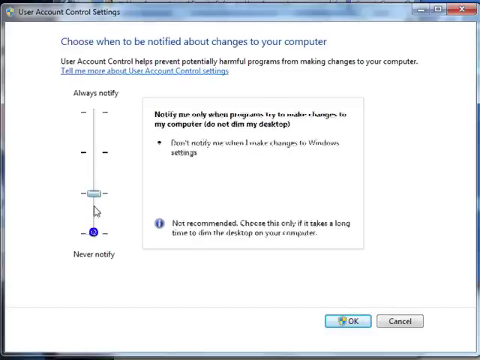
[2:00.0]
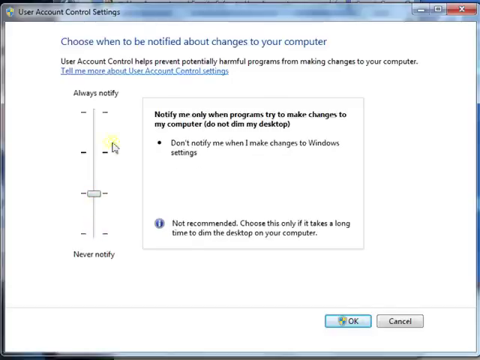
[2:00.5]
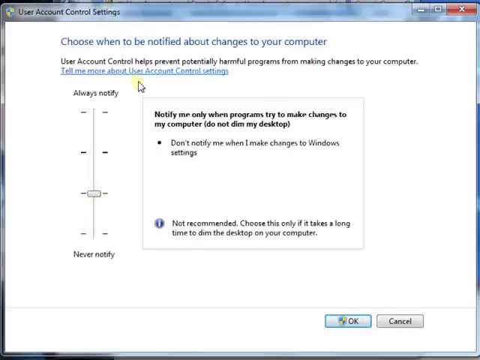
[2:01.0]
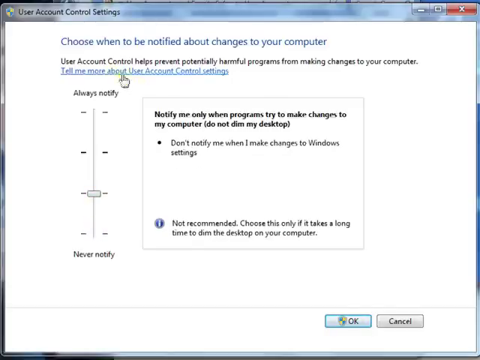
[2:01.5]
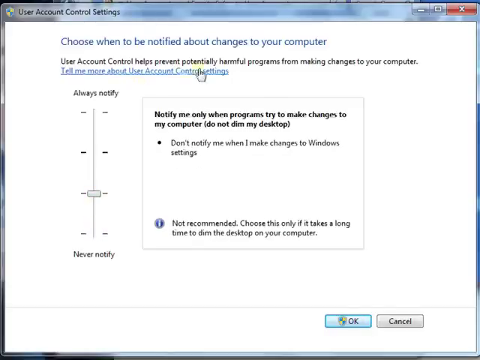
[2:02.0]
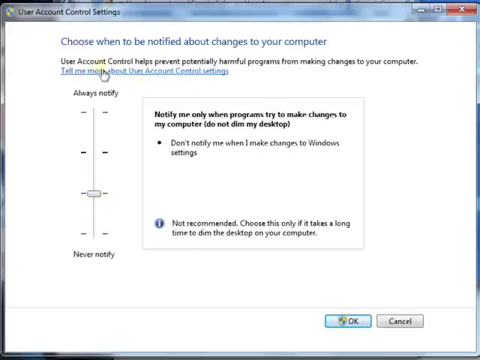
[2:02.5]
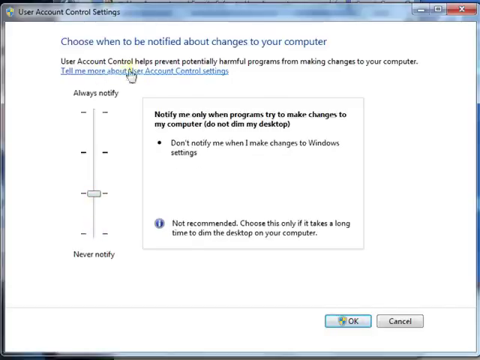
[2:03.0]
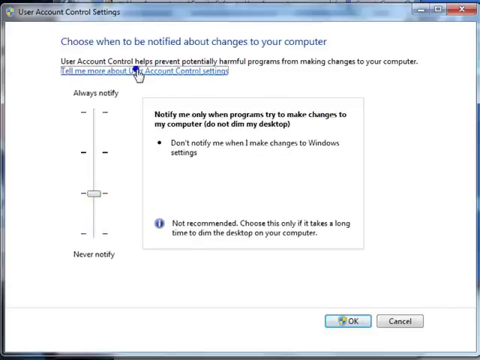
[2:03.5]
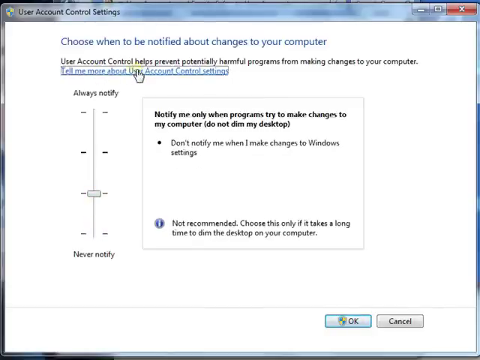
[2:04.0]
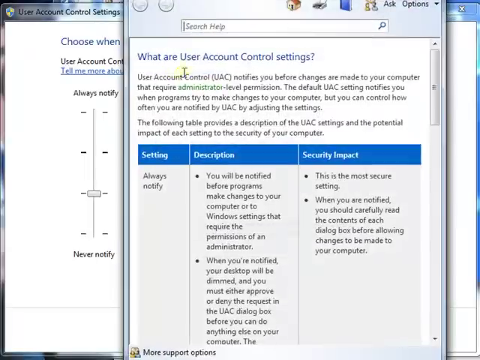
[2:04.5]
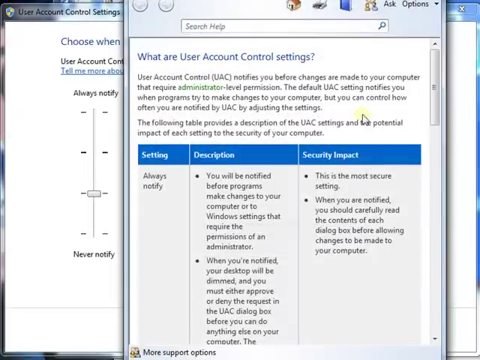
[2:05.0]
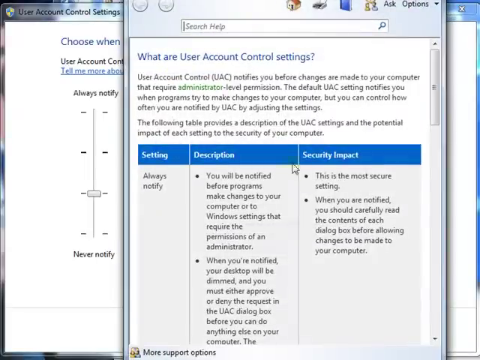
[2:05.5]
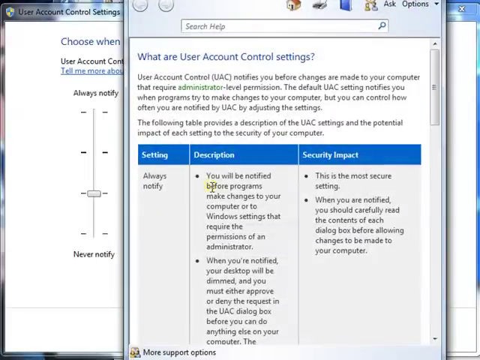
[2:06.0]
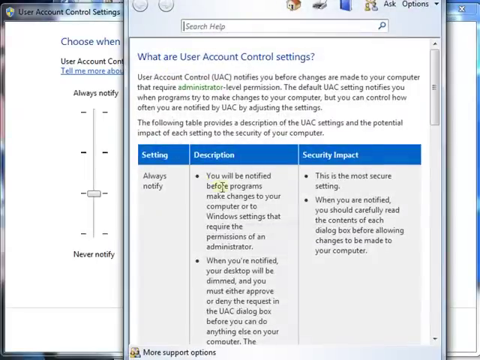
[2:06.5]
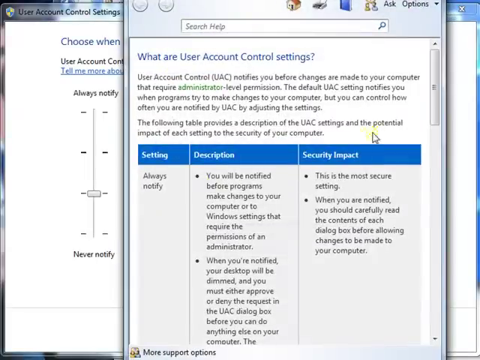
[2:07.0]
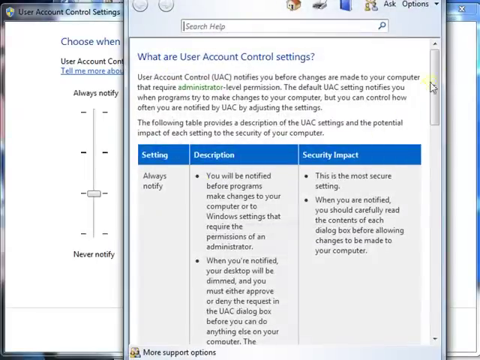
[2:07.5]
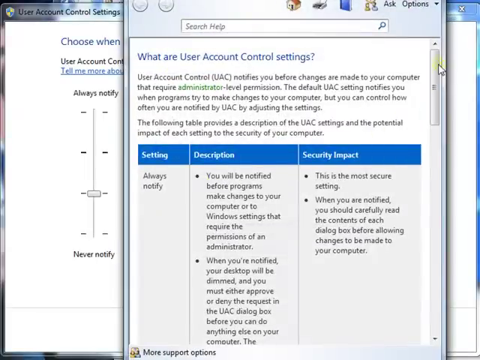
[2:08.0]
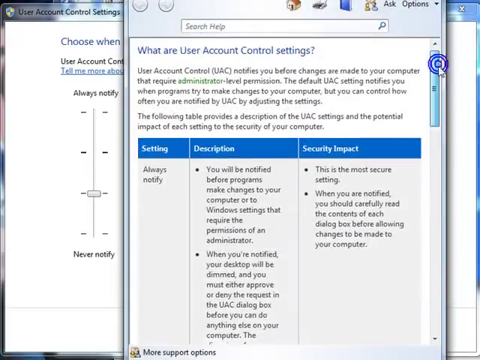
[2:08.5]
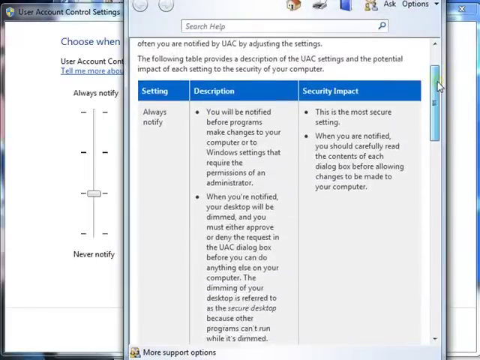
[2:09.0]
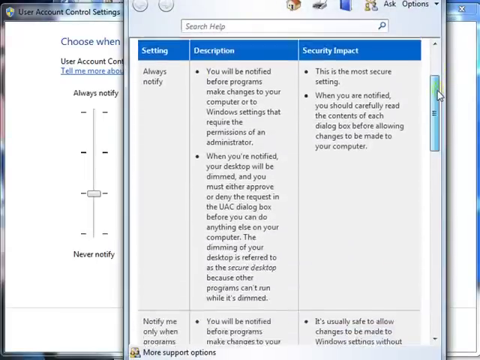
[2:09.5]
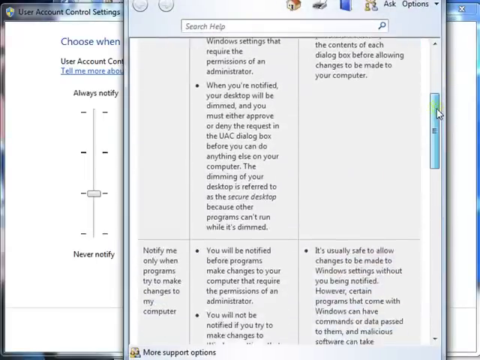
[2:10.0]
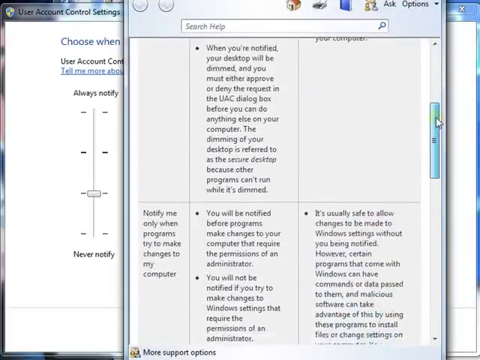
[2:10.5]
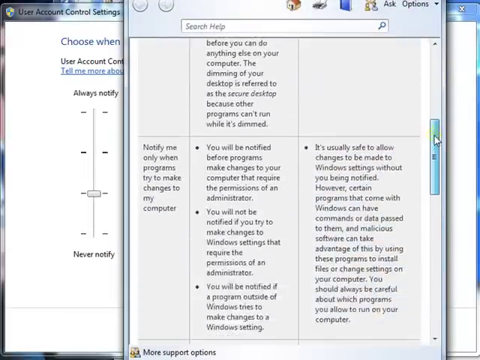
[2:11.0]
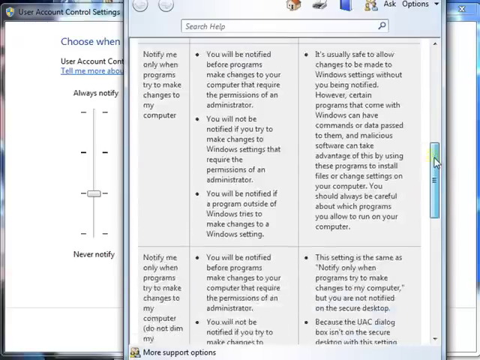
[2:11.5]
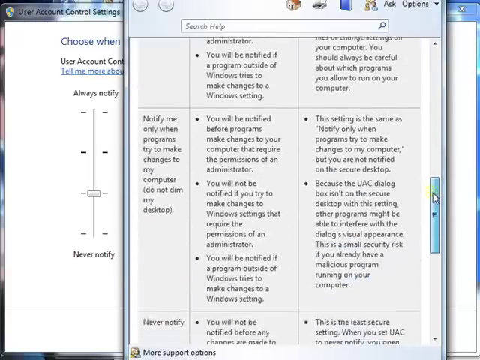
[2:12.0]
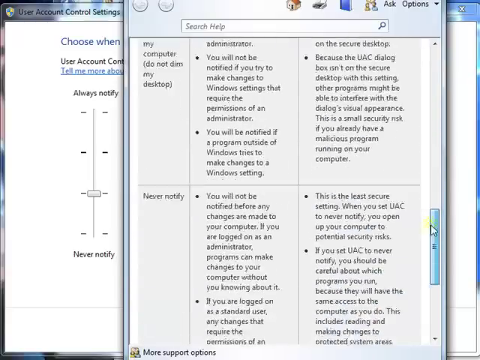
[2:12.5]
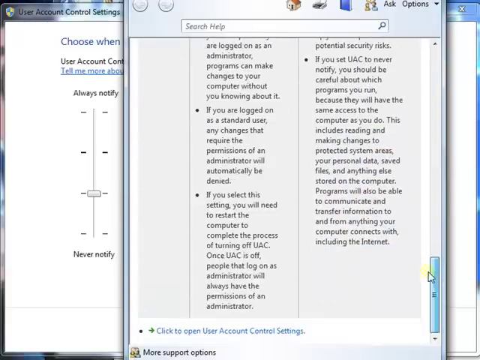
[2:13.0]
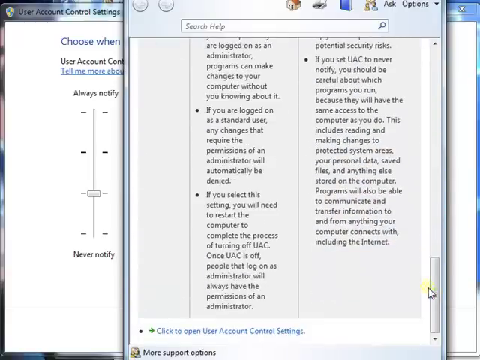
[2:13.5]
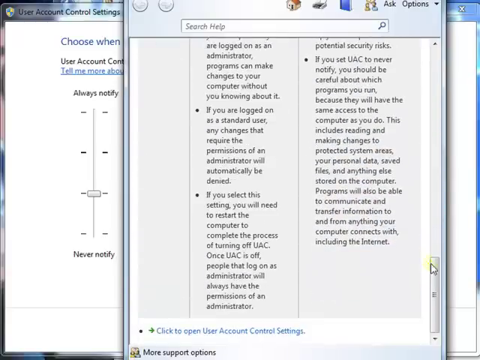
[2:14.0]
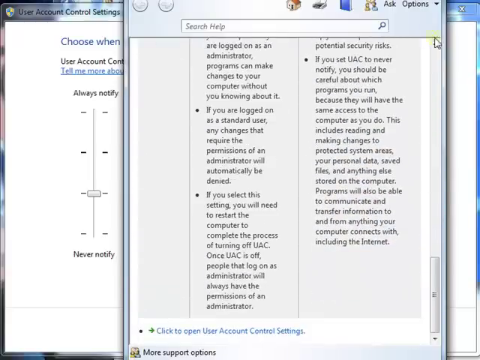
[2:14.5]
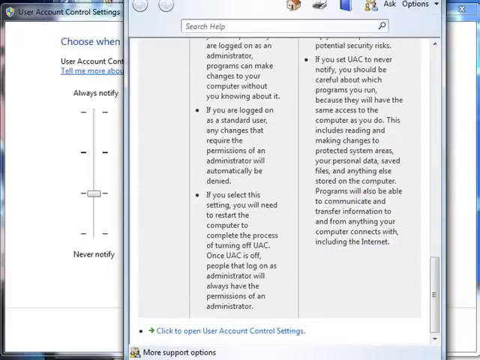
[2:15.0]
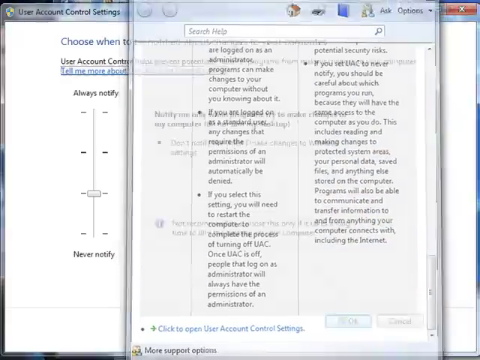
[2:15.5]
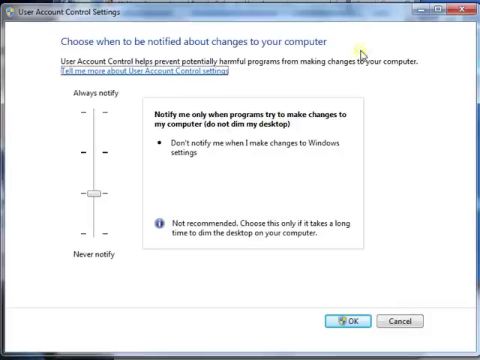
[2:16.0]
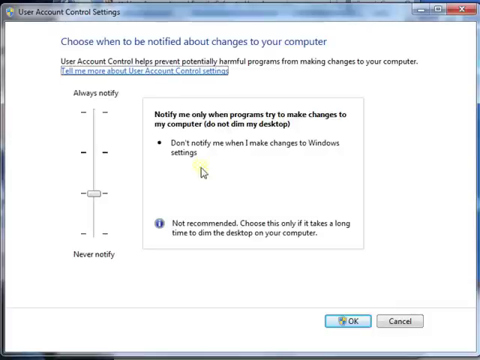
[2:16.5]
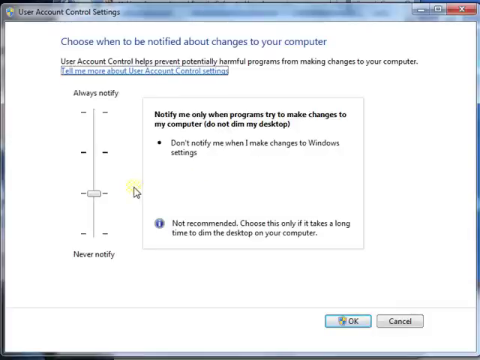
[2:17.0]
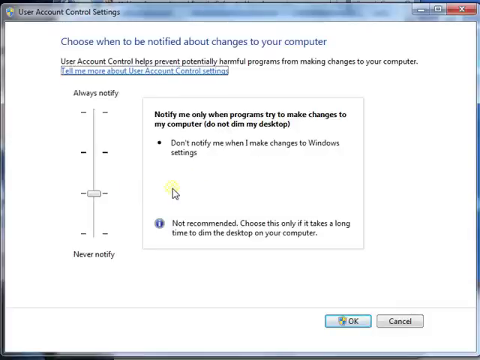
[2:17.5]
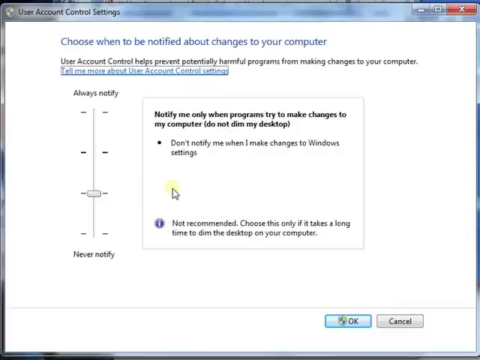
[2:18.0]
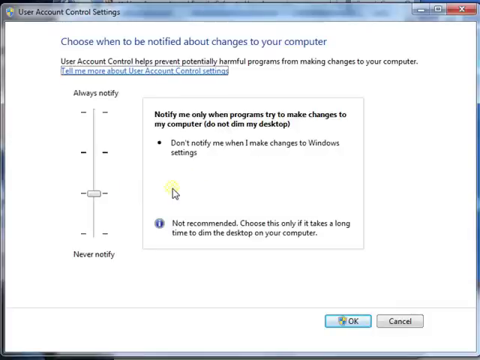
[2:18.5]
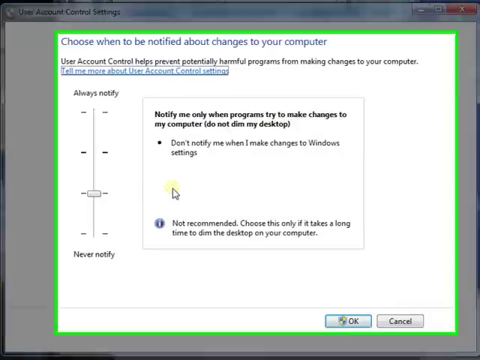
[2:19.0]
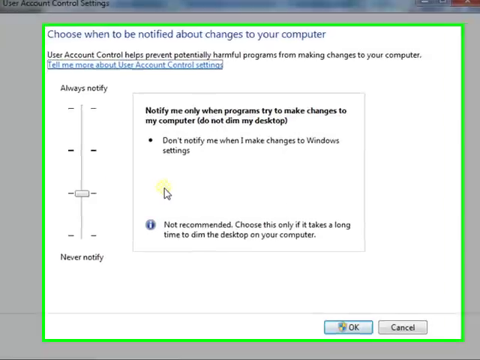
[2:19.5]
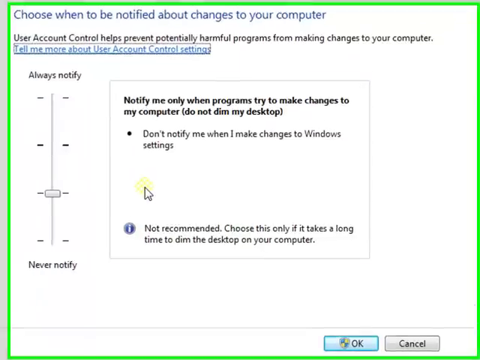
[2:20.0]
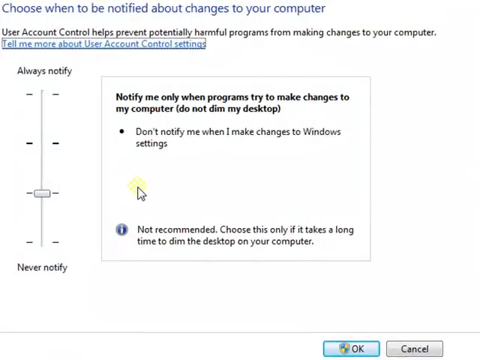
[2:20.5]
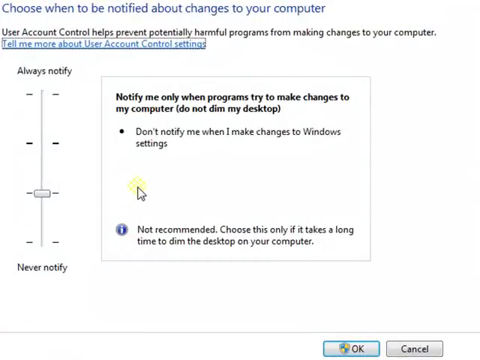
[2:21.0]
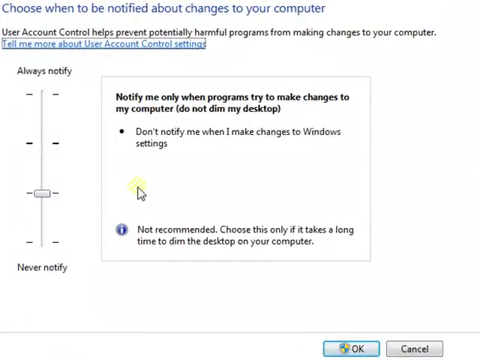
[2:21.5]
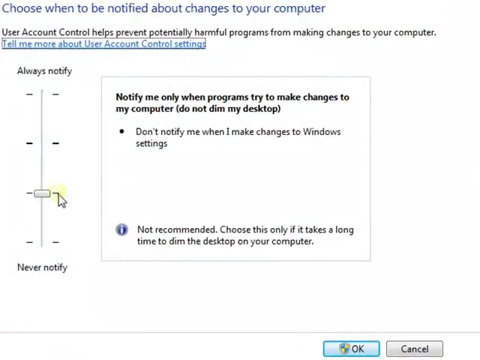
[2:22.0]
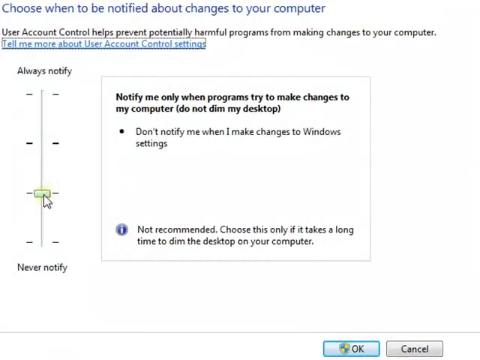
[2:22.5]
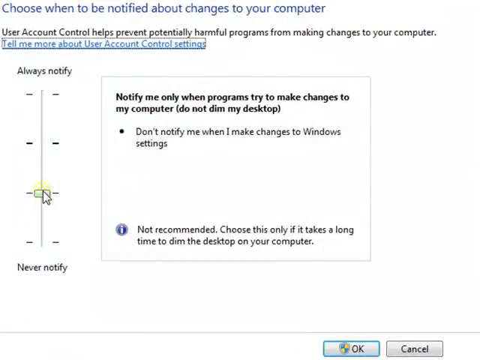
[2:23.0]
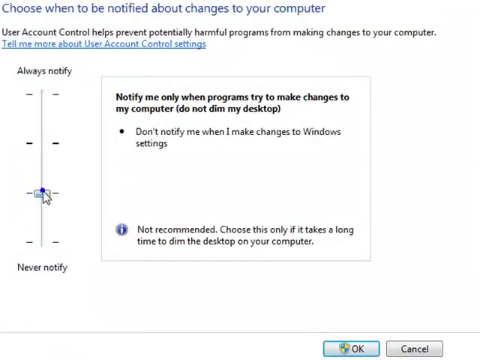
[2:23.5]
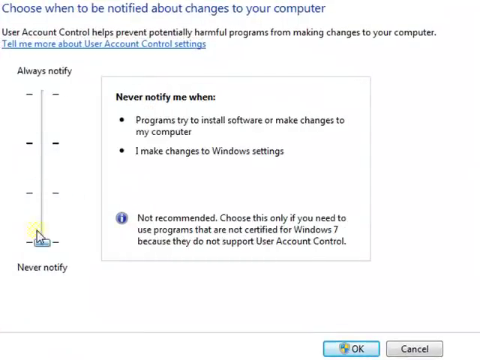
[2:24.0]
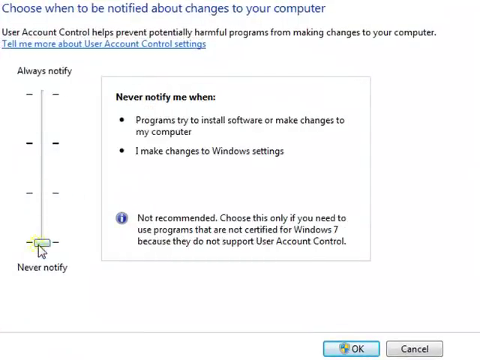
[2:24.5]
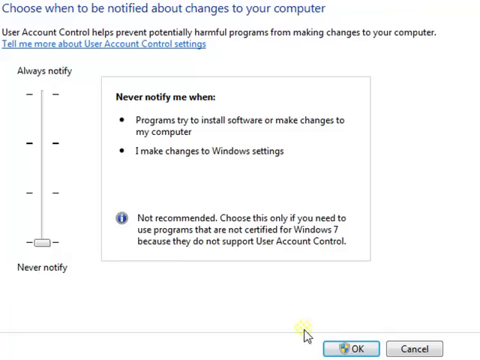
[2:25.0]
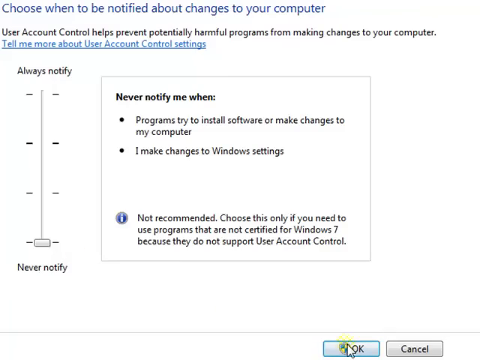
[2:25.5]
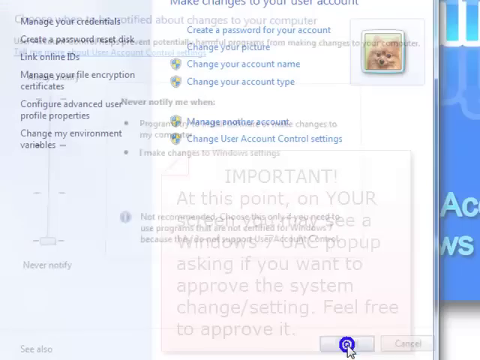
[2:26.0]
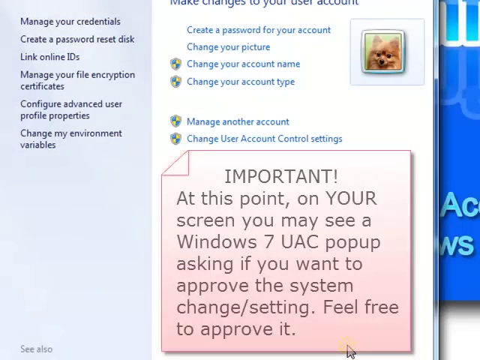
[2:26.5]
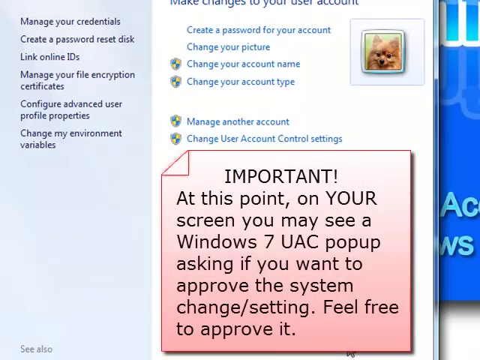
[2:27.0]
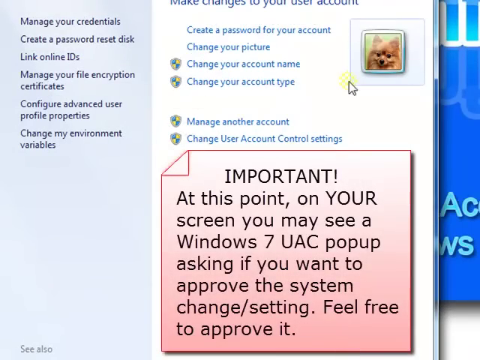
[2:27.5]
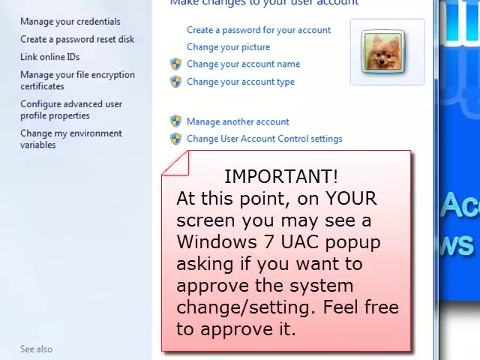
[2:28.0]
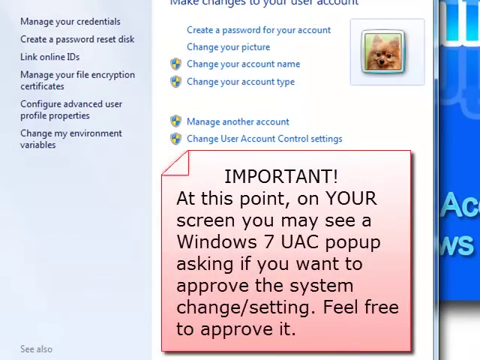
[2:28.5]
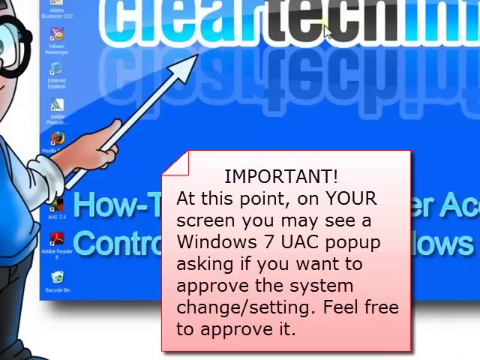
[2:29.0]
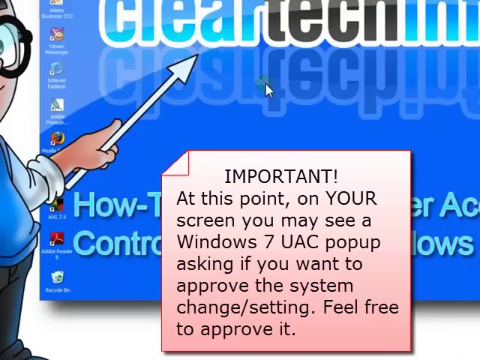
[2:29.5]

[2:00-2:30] The slider for the notify settings is moved again. Then something at the top saying "tell me more about" something is clicked; it goes by fast. A dialog box pops up saying "what are user account control settings?" followed by a lot of black text. The mouse moves around and the person scrolls down with the classic Windows 7 scroll bar on the right-hand side. The box then disappears, apparently closed off screen. The view zooms in farther on the notify settings, looking at the dialog box on the right-hand side, and the slider is moved again. An added note appears saying "important" and "you may see a Windows 7 UAC pop-up asking if you want to approve the system changes settings, feel free to approve it".